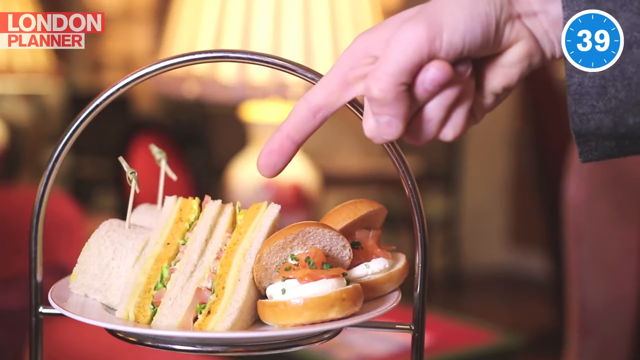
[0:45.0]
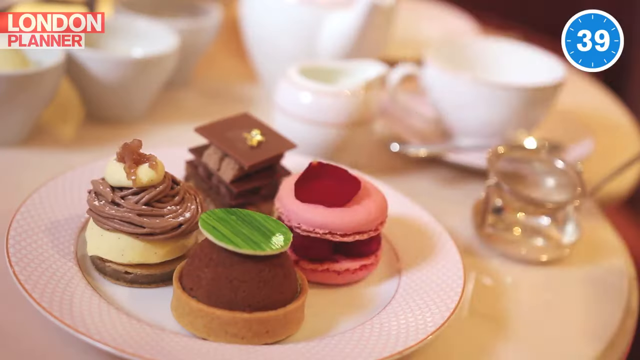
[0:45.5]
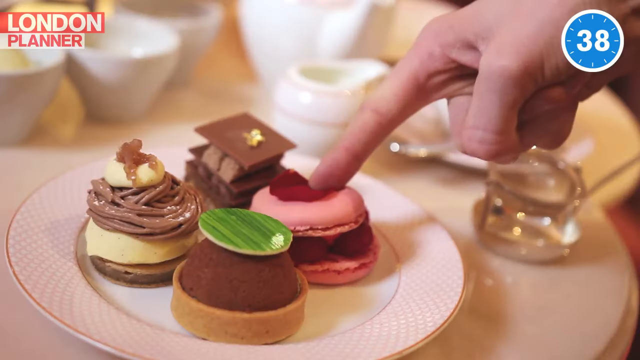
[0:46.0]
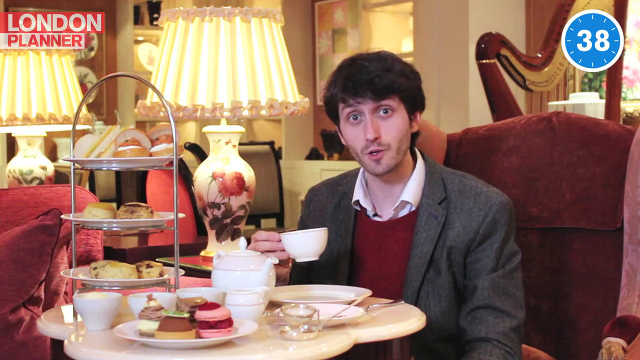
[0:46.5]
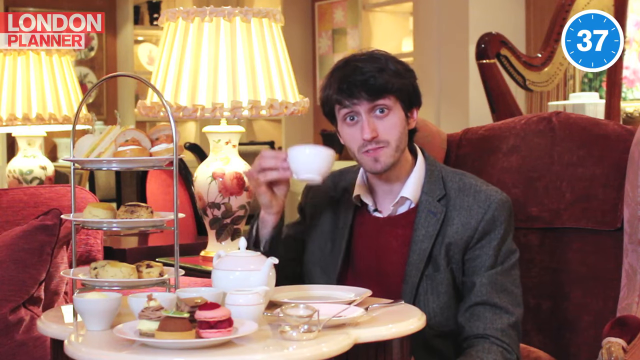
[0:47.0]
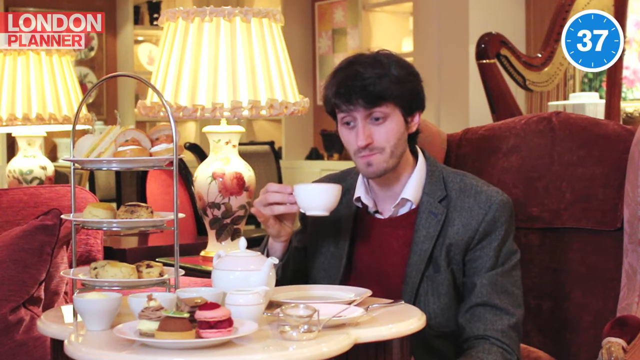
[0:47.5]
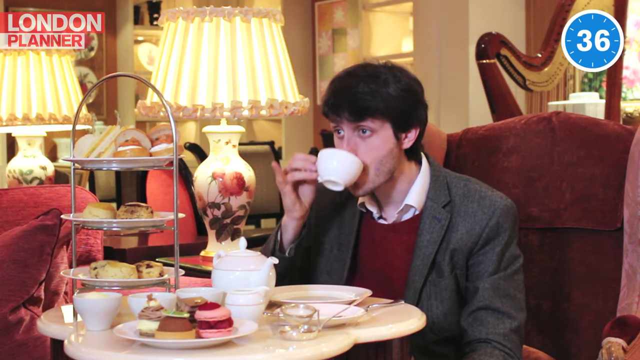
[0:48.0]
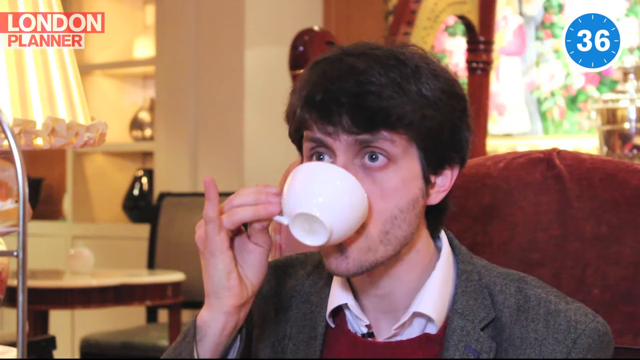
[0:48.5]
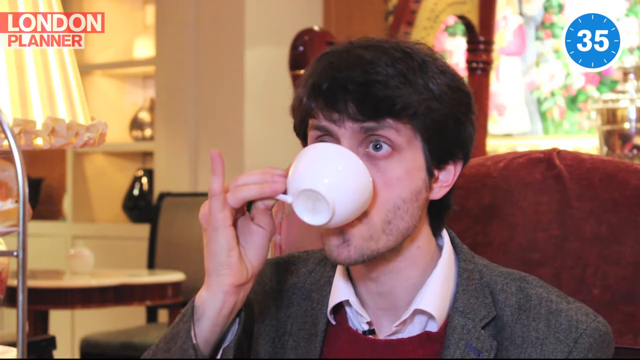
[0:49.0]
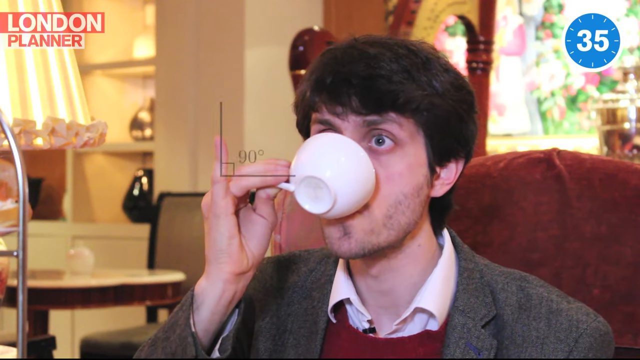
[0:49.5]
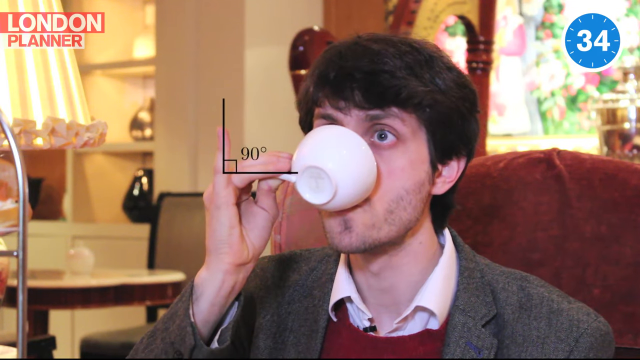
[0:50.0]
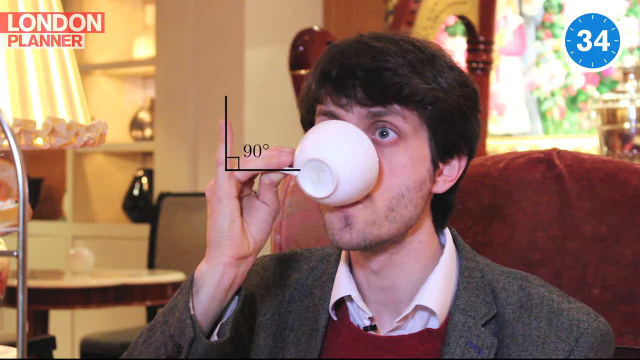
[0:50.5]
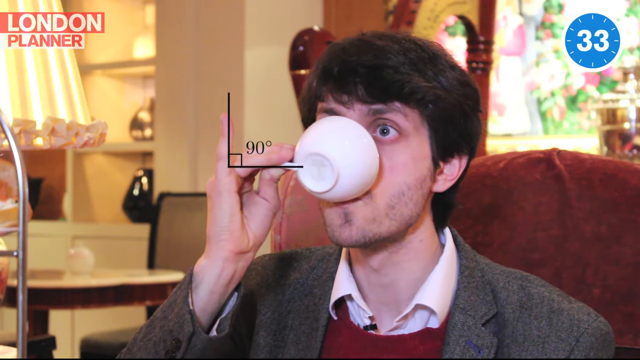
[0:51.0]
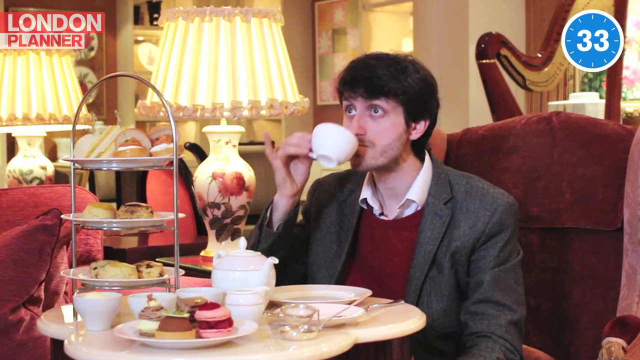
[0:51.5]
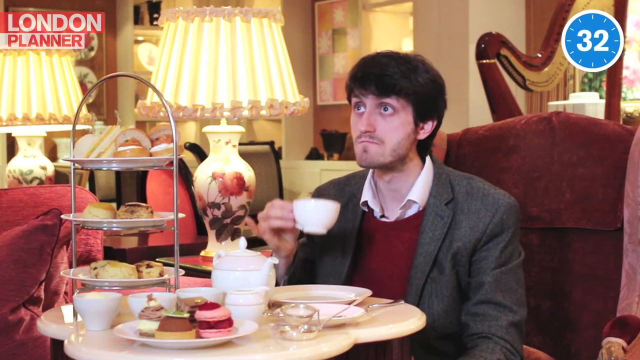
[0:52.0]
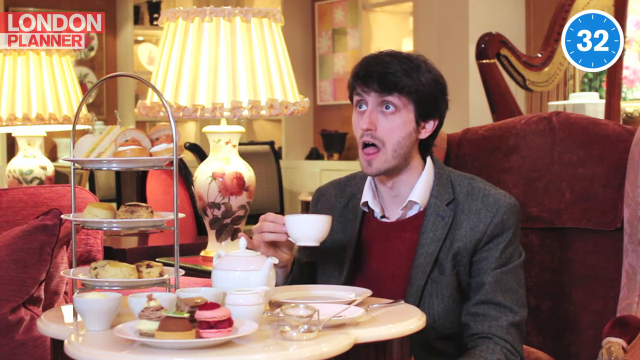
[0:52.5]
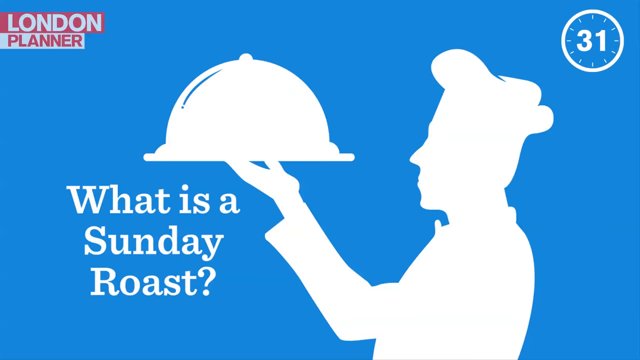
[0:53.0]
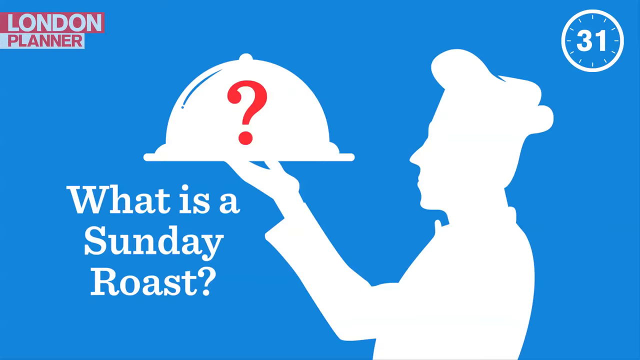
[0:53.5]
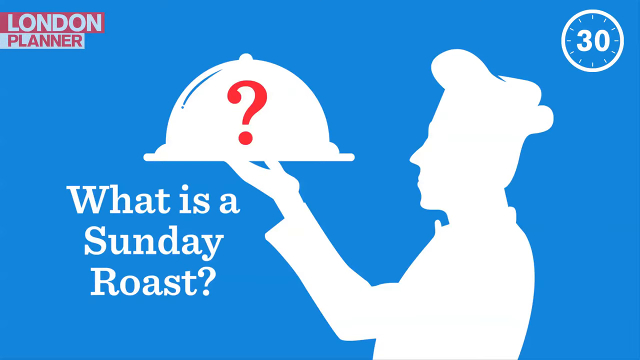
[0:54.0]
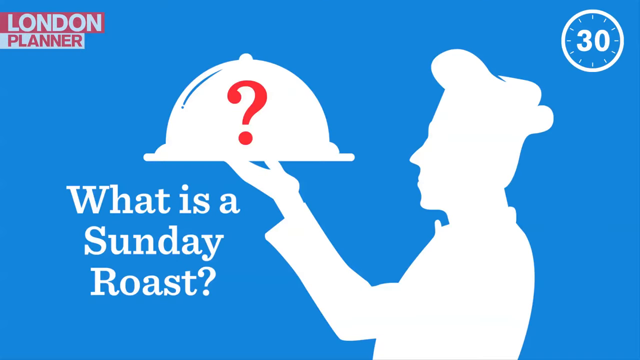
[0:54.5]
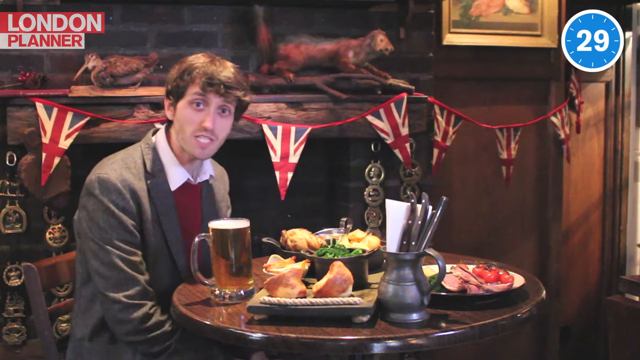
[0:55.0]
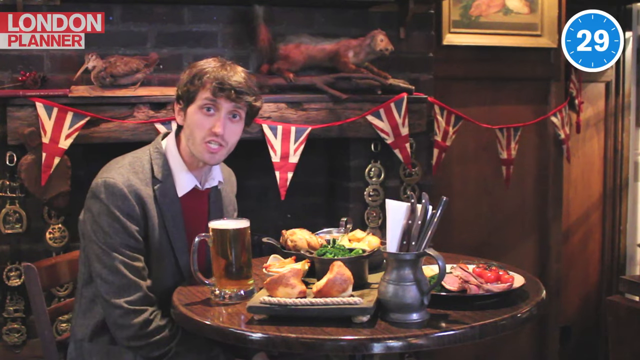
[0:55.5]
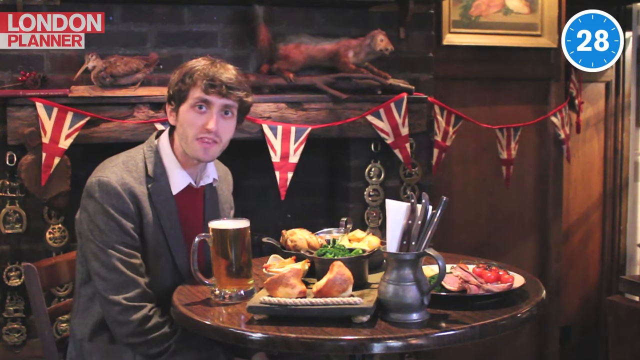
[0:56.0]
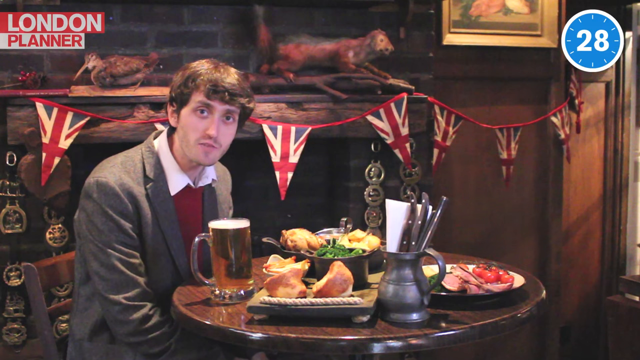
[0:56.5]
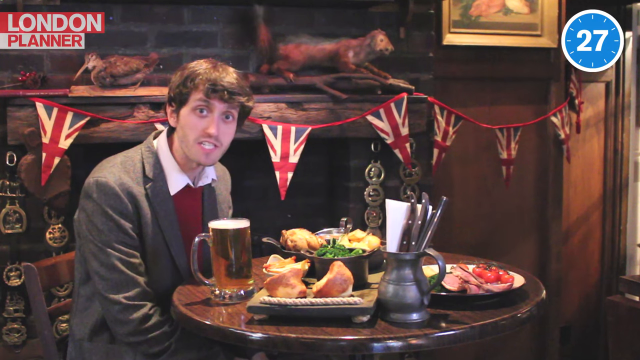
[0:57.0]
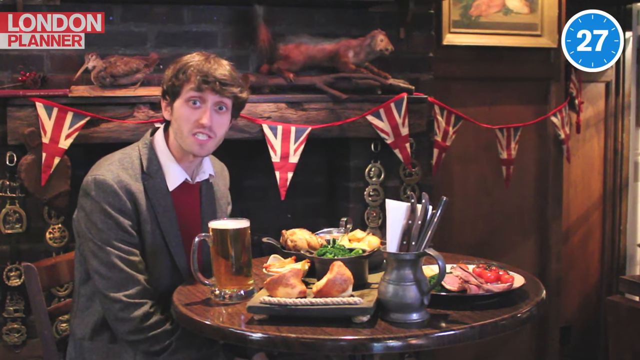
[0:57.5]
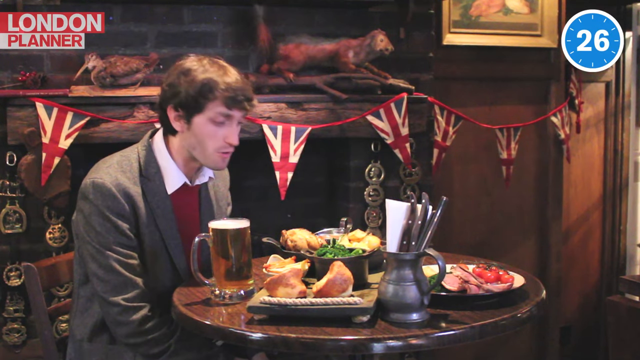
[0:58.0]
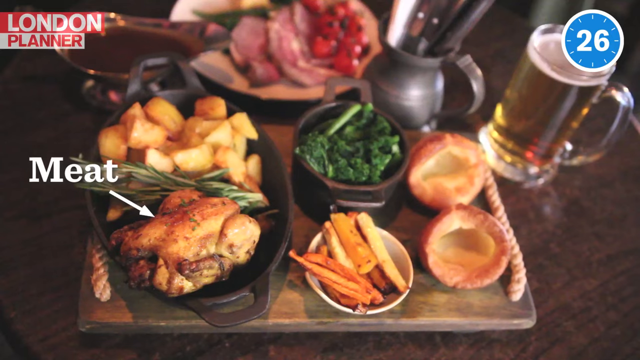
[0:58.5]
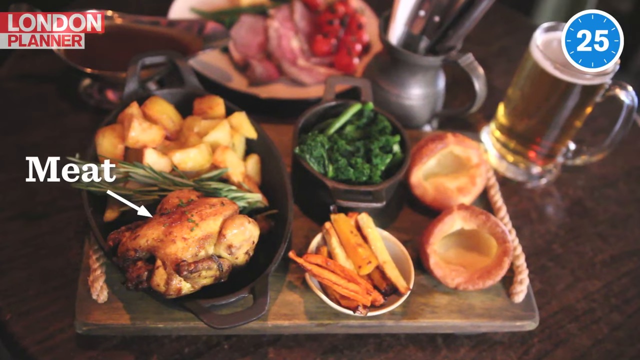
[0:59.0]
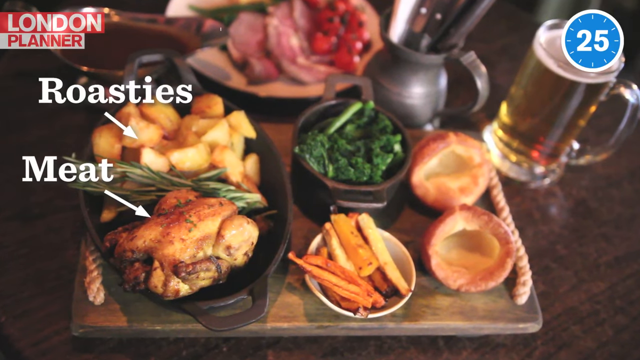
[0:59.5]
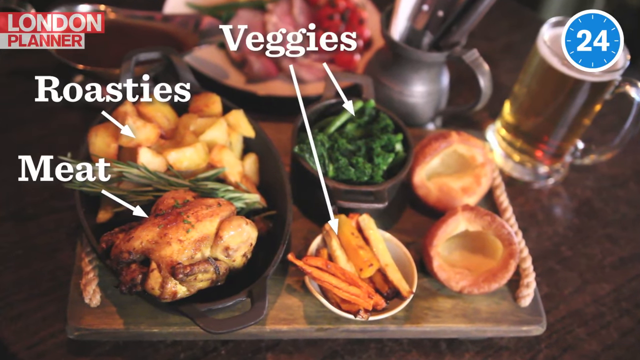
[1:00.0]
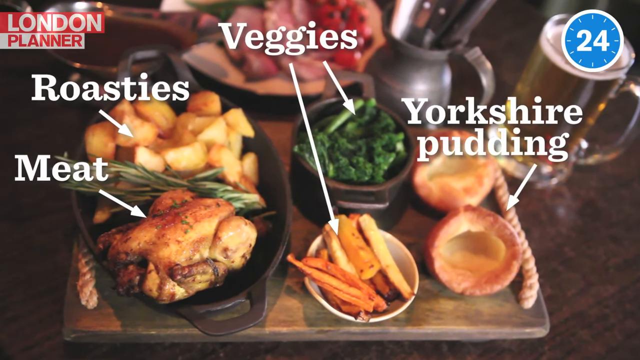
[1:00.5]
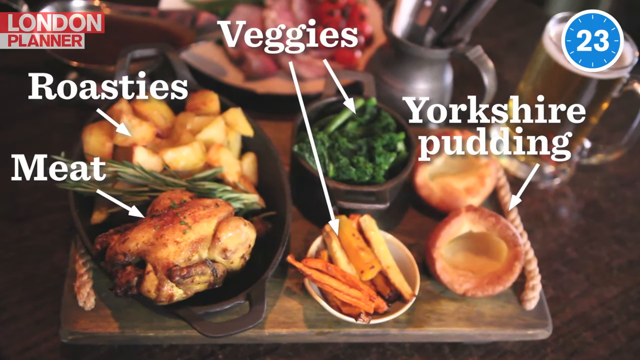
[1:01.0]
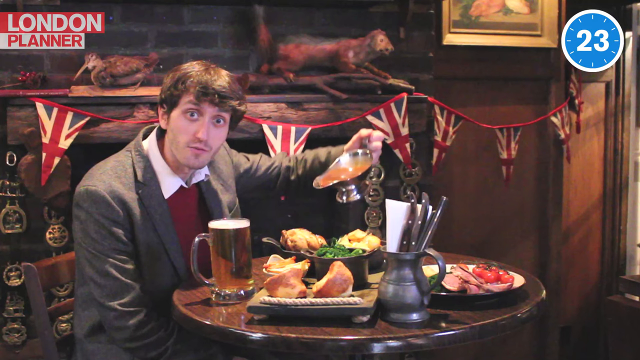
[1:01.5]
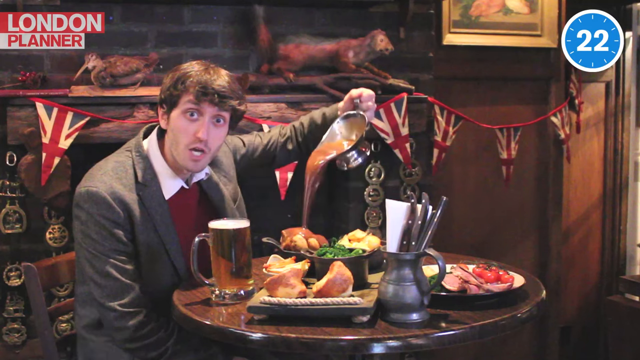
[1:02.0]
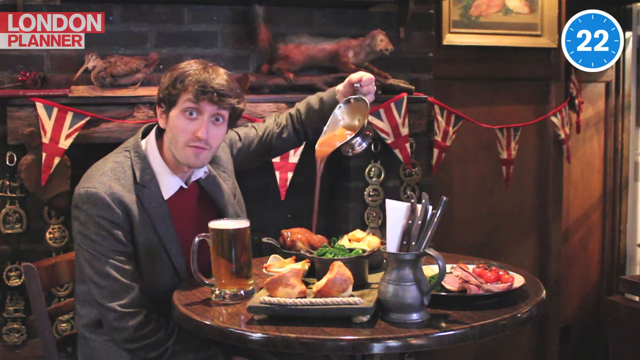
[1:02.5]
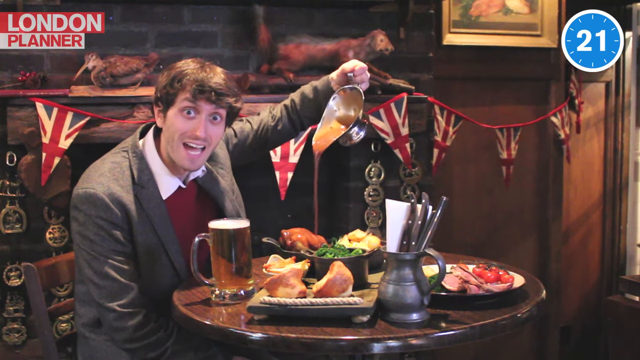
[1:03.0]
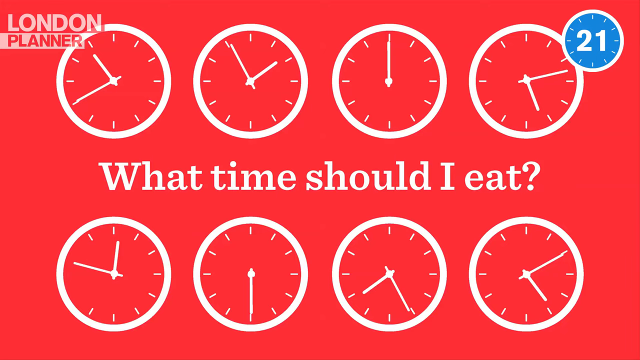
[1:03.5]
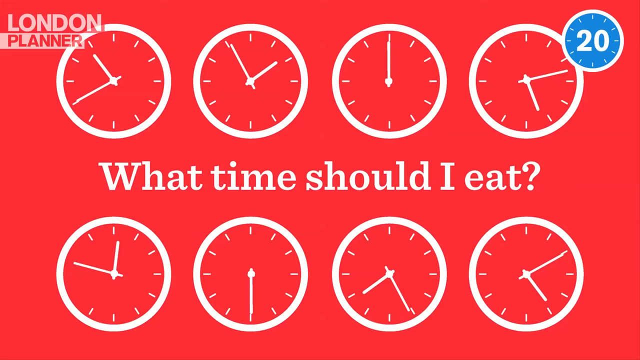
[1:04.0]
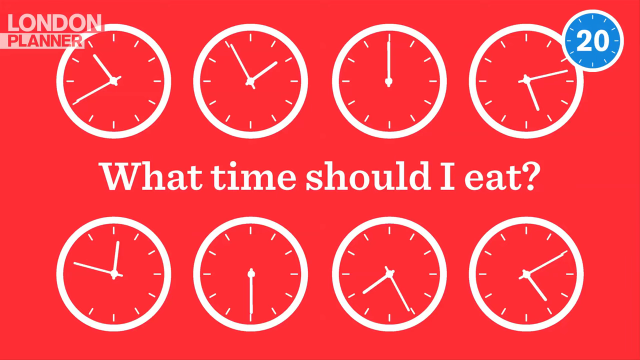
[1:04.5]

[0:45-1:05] The man is at a tea place with a tea spread, macaroons and some sandwiches, and he points to them. On his table is a three-shelf display of tiny foods. The tea place looks very exquisite, with a lamp that looks like porcelain and has a flowery design. The video then switches to text reading "what time should I eat?" with four different clocks, followed by "what is a Sunday roast?" He goes into a restaurant with roast beef and a pint of beer, picks up a little dish of gravy, and pours it from the top like a waterfall. Then the scene is at the tea place again, dealing with how to hold a teacup.